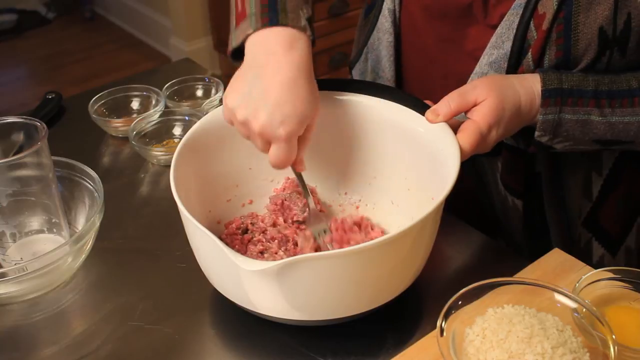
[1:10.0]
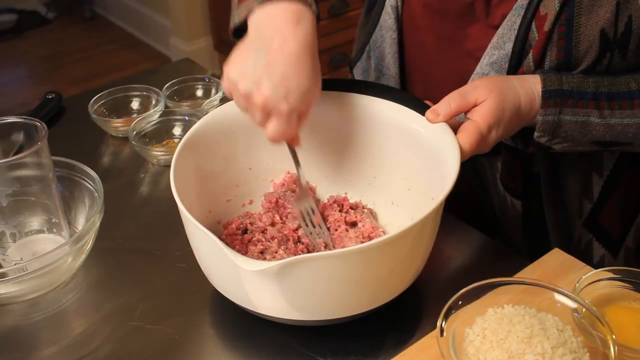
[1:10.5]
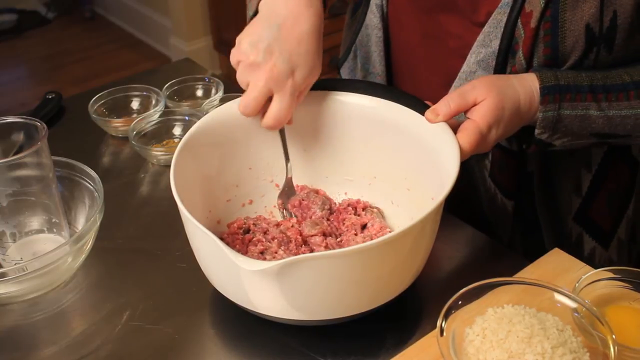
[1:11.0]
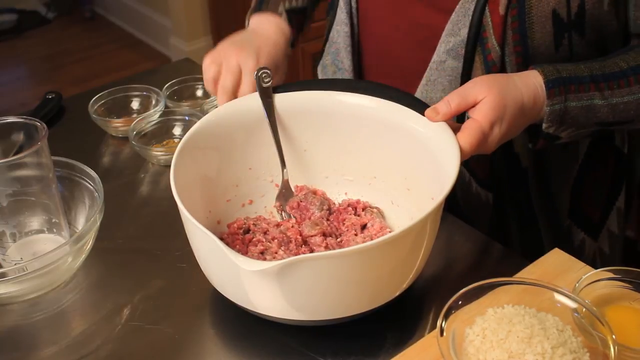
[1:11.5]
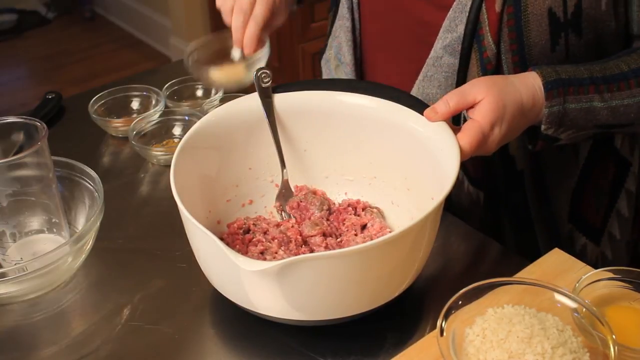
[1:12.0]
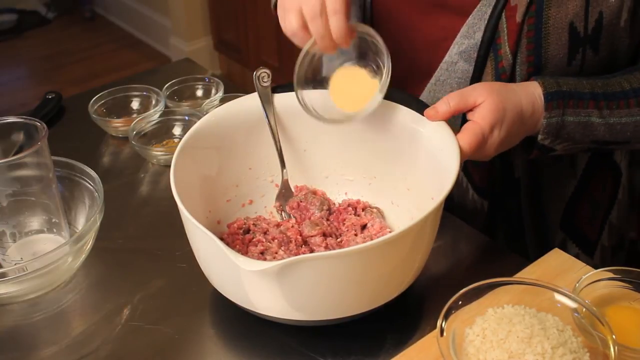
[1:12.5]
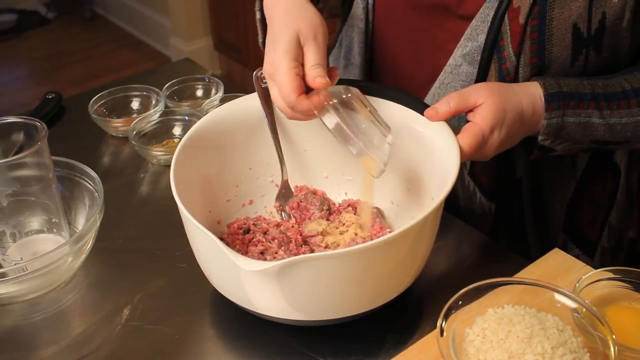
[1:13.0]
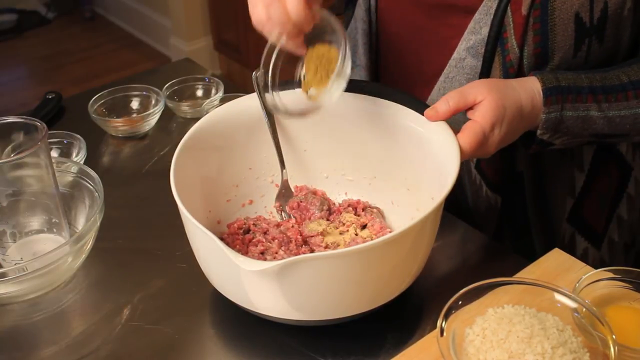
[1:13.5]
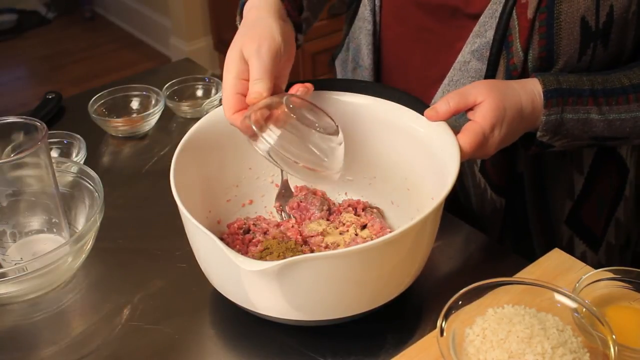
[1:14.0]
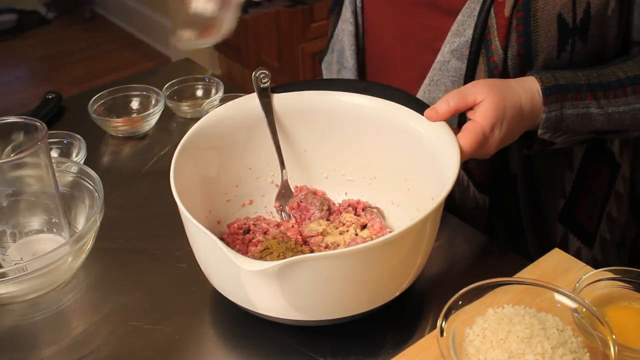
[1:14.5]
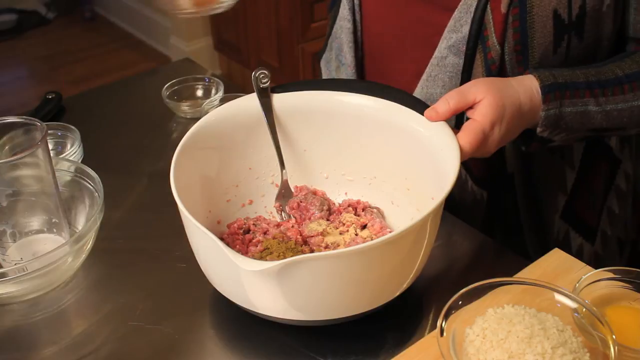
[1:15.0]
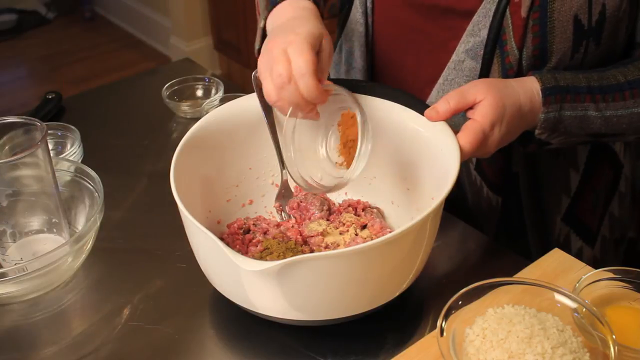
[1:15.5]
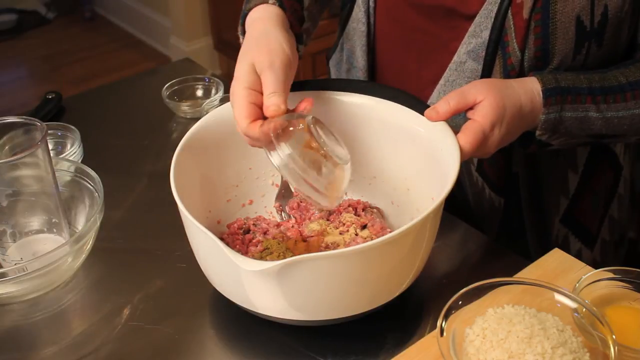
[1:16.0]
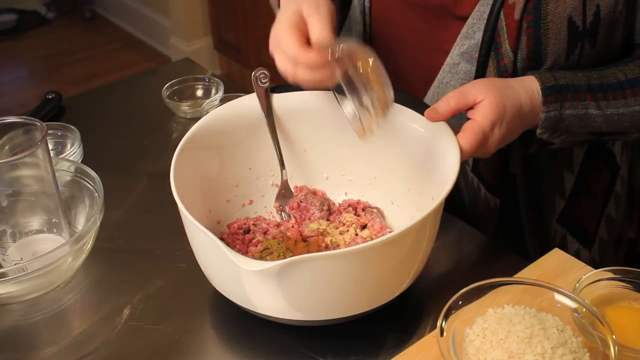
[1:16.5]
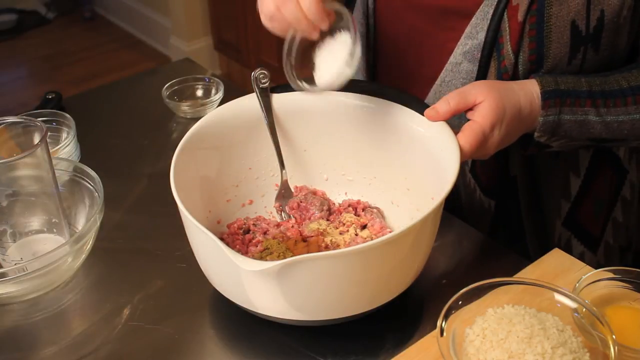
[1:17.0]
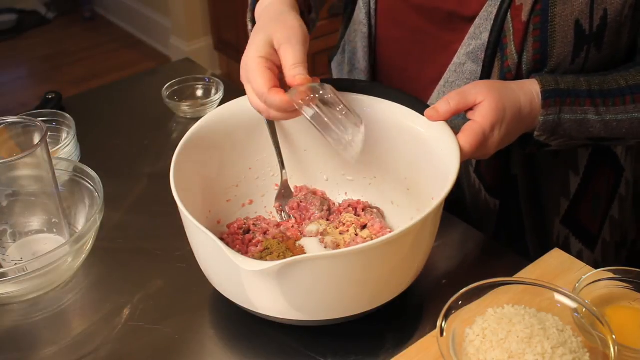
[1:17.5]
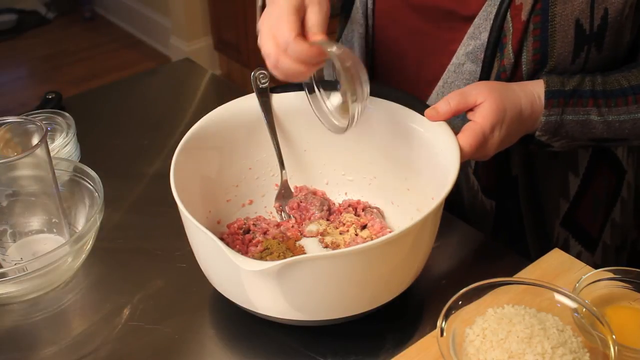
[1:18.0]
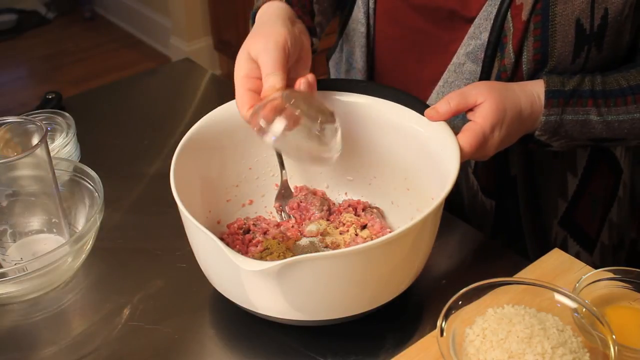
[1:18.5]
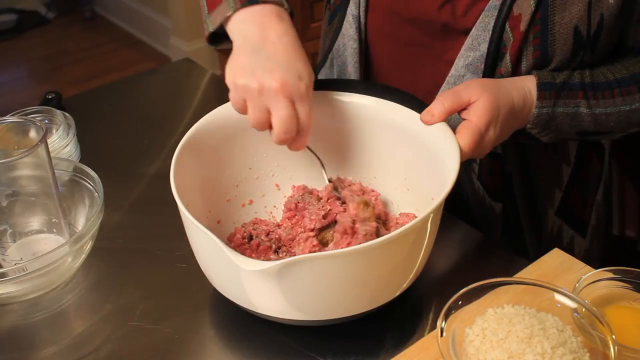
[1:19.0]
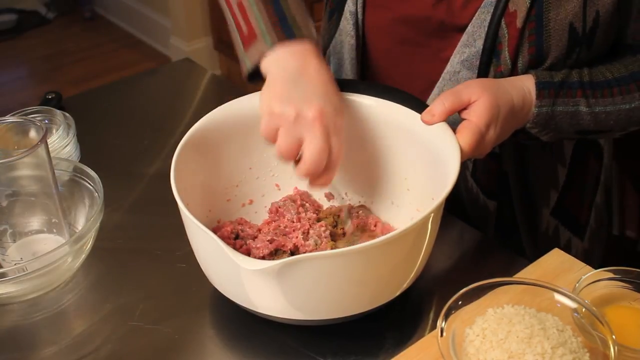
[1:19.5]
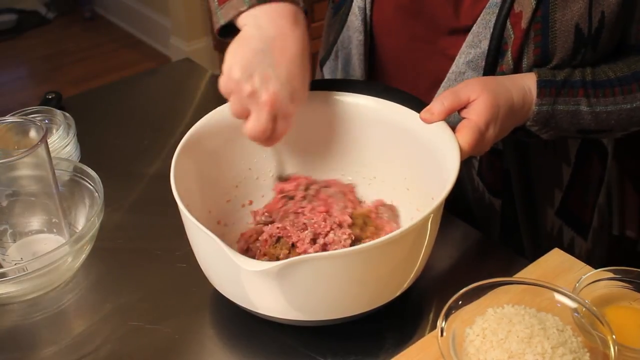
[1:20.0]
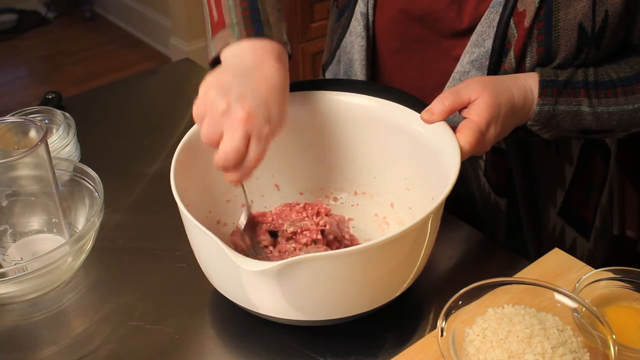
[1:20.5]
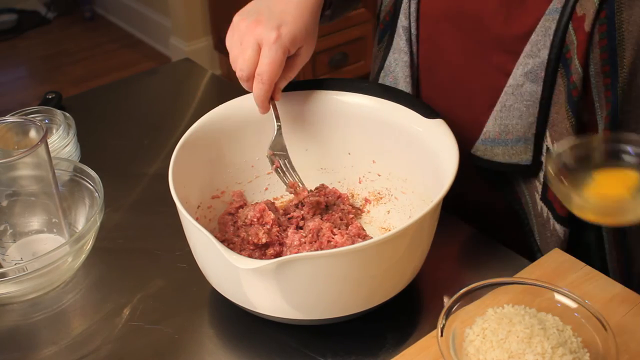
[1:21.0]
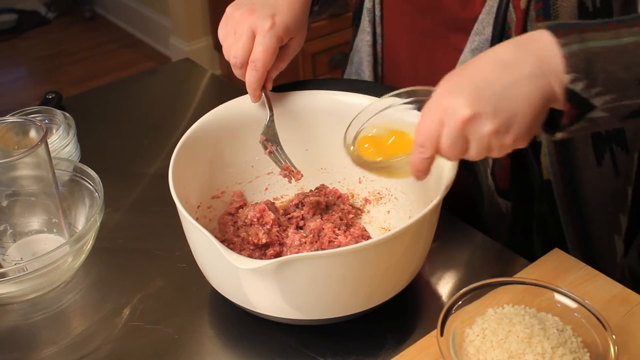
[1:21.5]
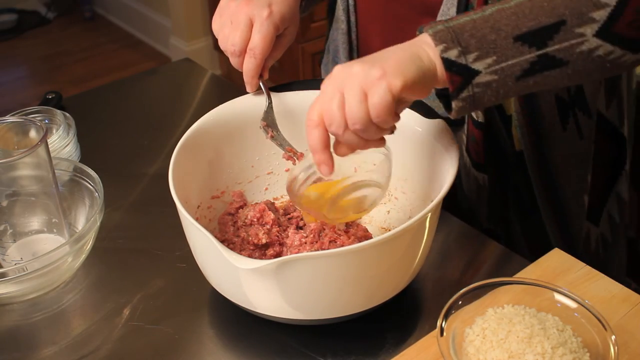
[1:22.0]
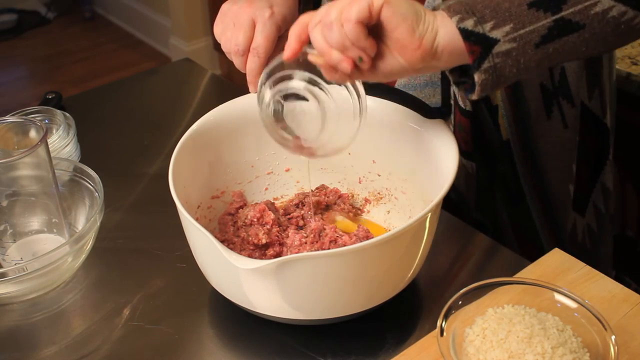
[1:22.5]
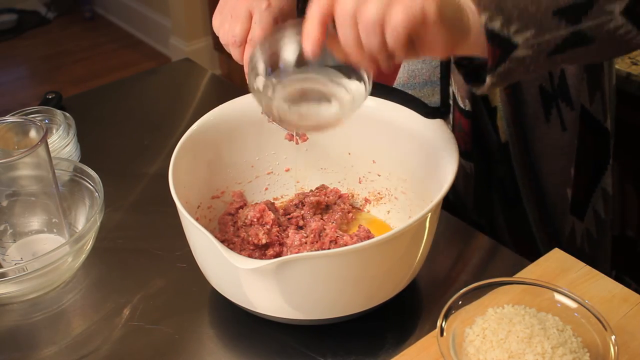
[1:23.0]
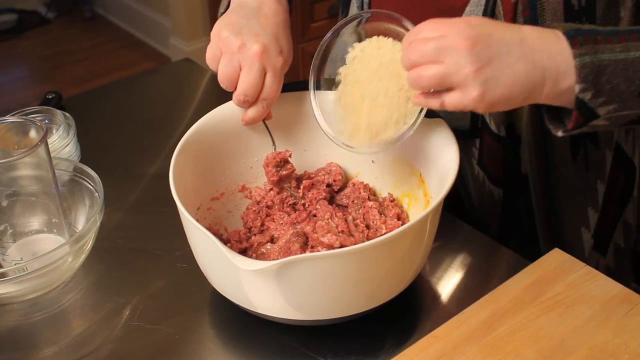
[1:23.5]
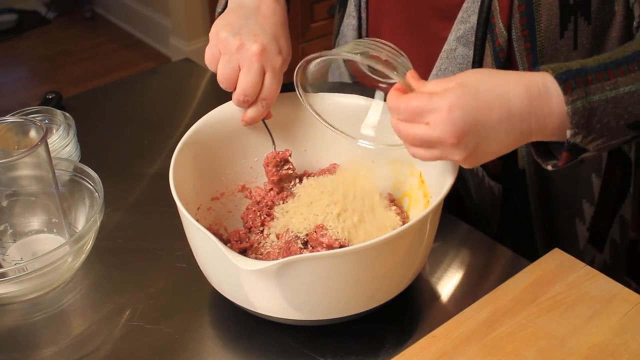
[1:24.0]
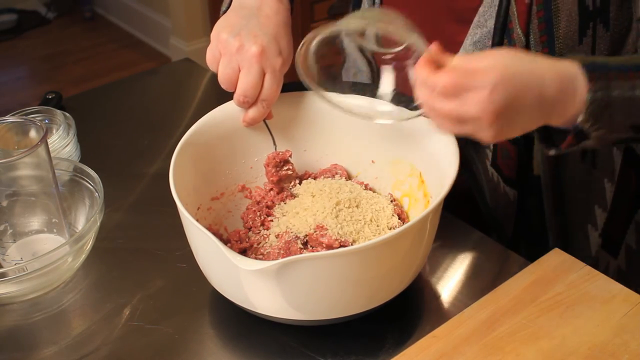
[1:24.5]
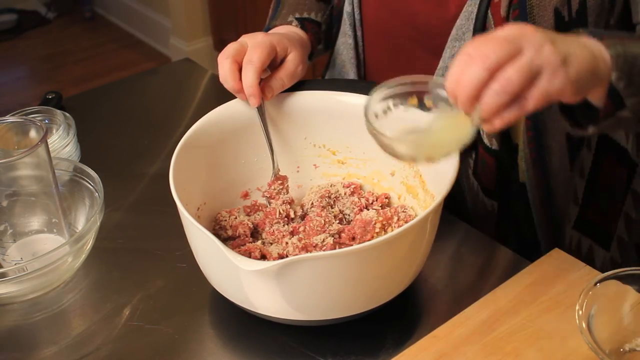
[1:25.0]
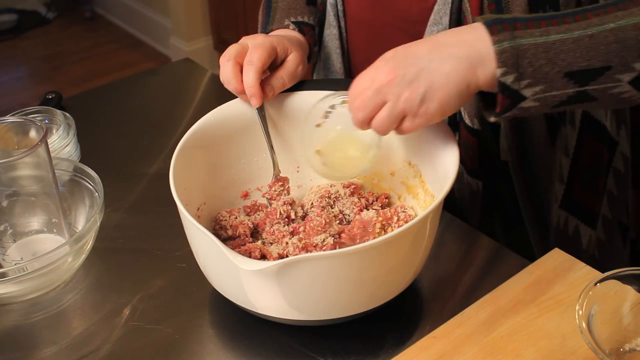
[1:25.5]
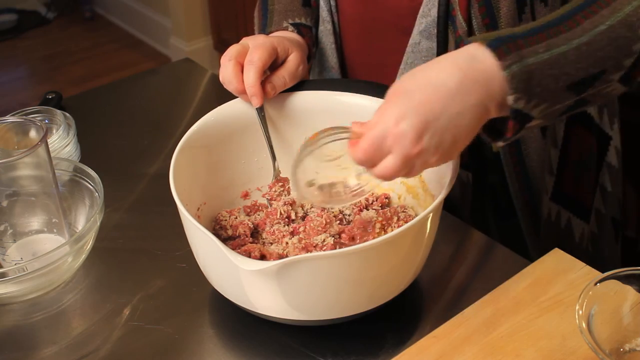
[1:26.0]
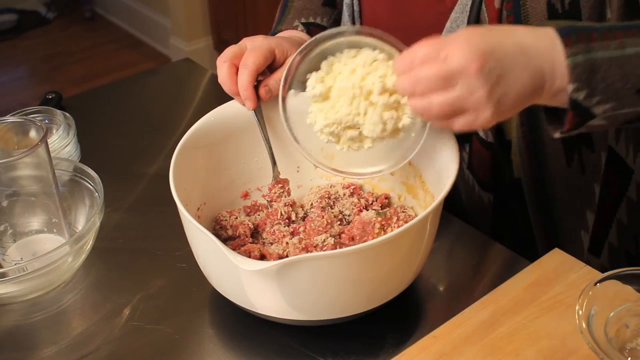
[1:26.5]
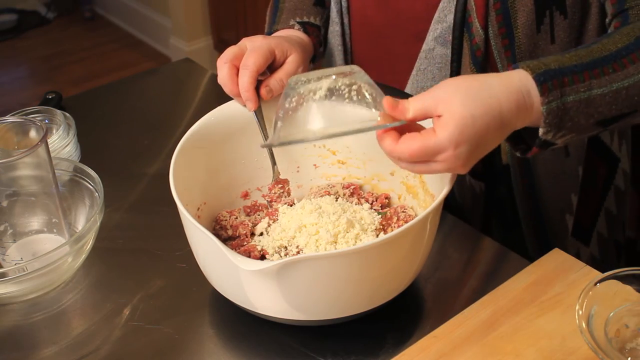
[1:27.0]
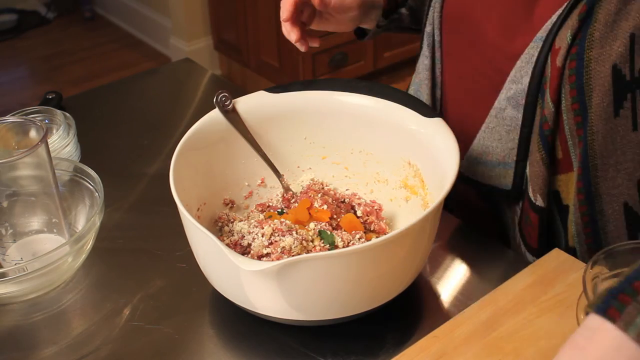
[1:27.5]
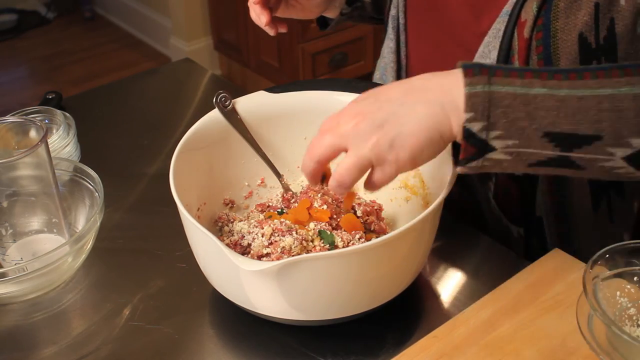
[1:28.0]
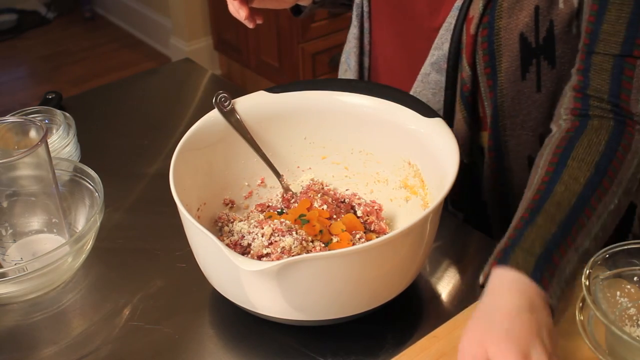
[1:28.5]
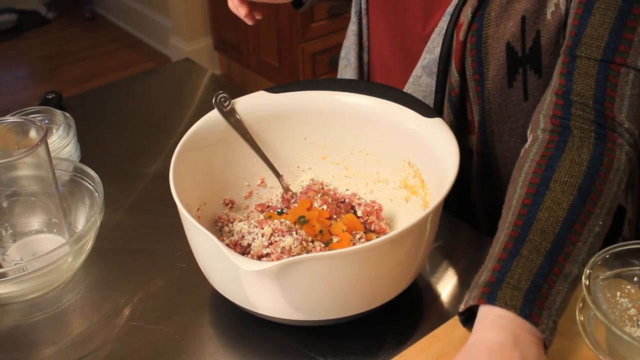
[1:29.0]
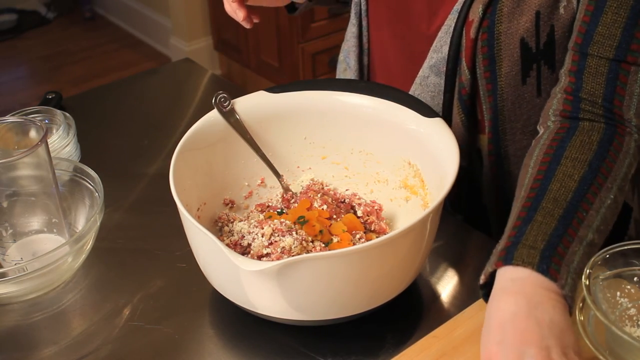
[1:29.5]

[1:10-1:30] The woman combines the individual ingredients in one large white plastic bowl. First she pours in the ground beef, followed by a milky liquid. Next she pours in a clear or yellowy powder, probably garlic powder, then a cinnamon-colored powder, maybe pepper, then a darker red powder, maybe cayenne, then a white powder, probably sugar, and then a blacker powder, probably pepper. She kind of mixes it all together with a fork in her right hand. With her left hand she pours the egg mixture on top of everything while continuing to mix with the fork in her right hand. She then pours in what is apparently breadcrumbs with her left hand, still mixing with the fork in her right hand. She mixes in the melted butter with her left hand, then a powdered-consistency ingredient, and then adds the nuts.